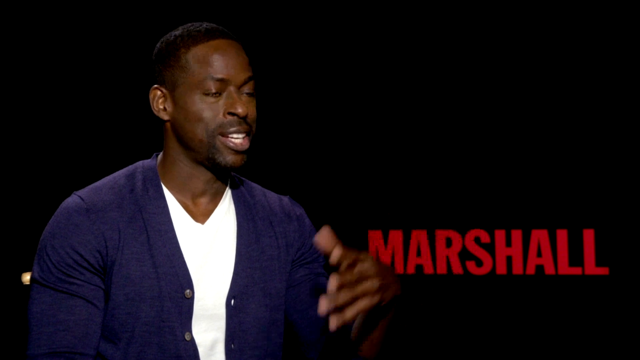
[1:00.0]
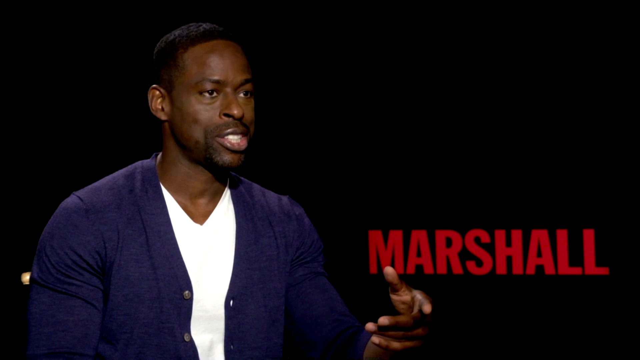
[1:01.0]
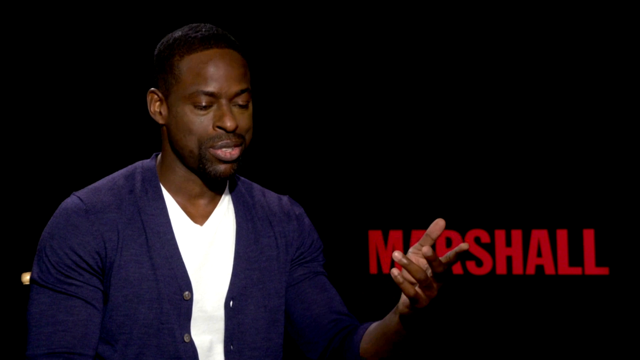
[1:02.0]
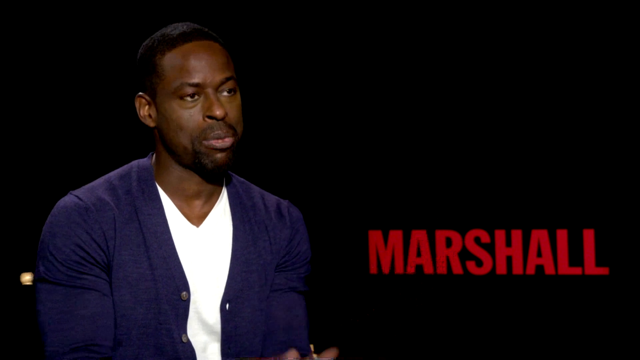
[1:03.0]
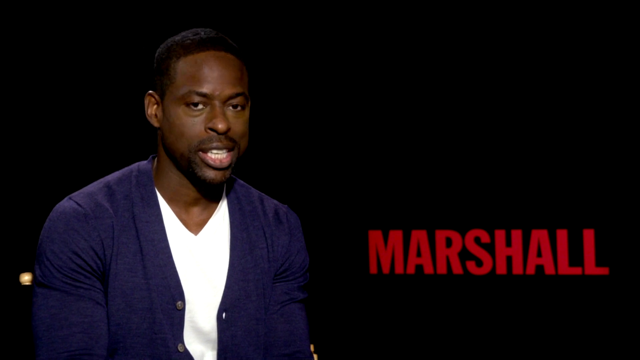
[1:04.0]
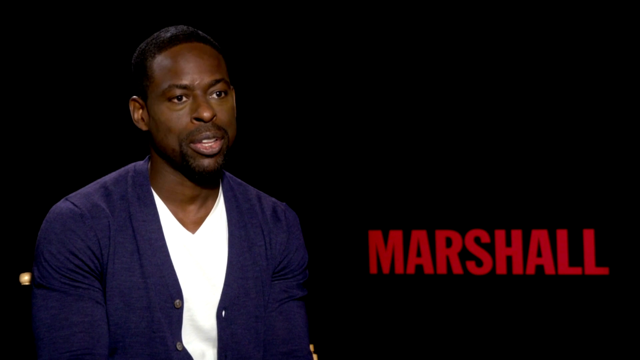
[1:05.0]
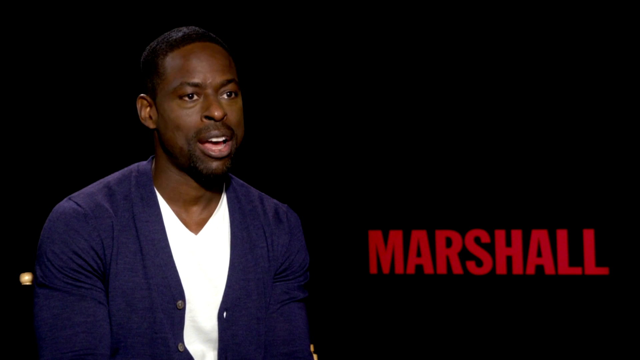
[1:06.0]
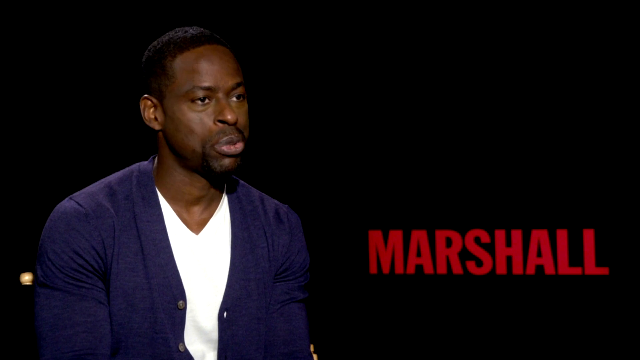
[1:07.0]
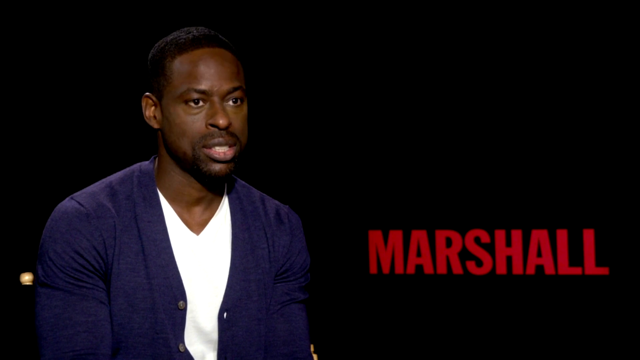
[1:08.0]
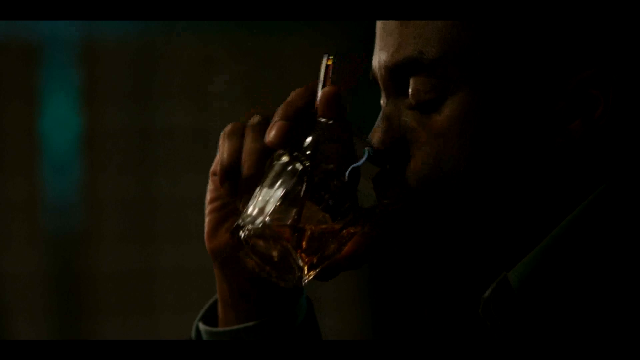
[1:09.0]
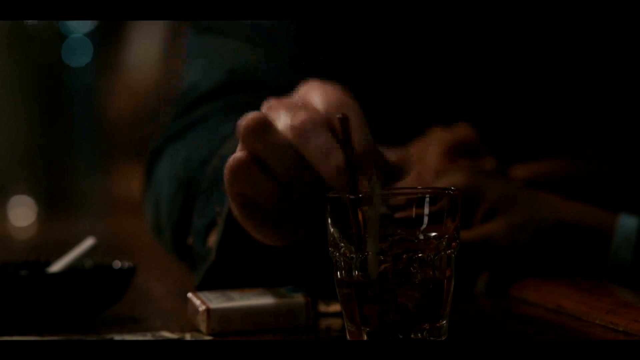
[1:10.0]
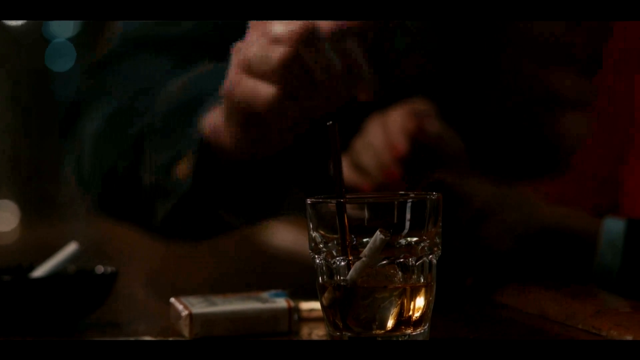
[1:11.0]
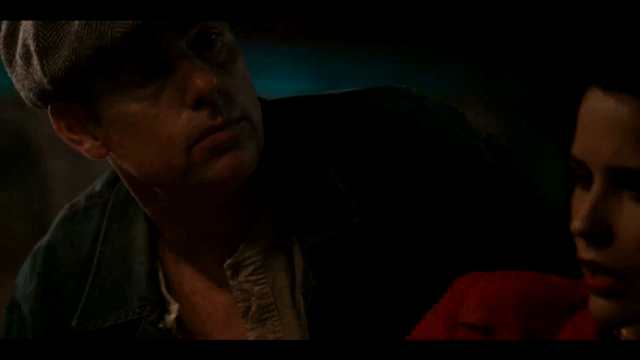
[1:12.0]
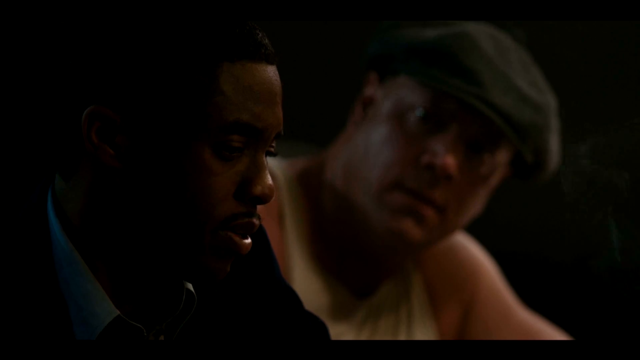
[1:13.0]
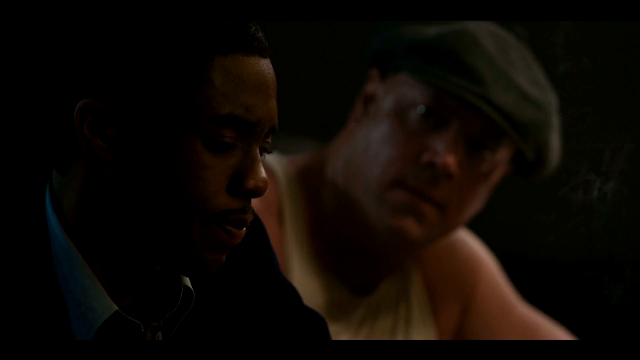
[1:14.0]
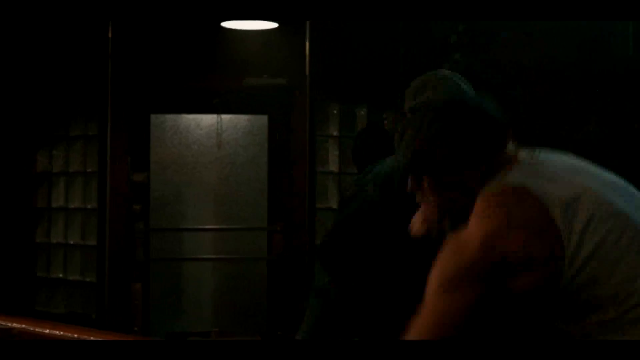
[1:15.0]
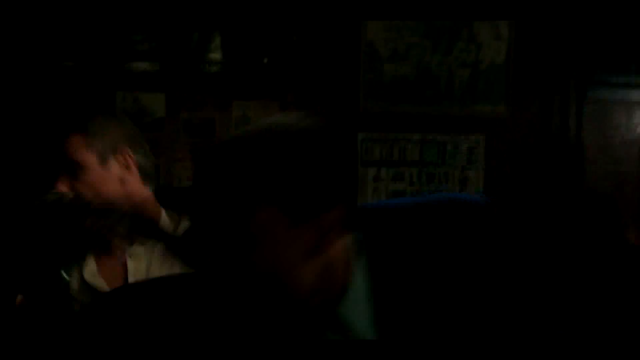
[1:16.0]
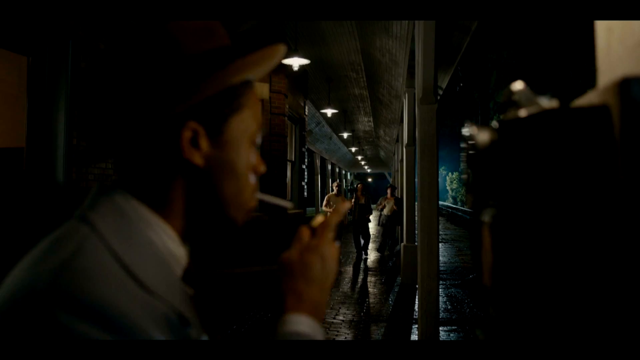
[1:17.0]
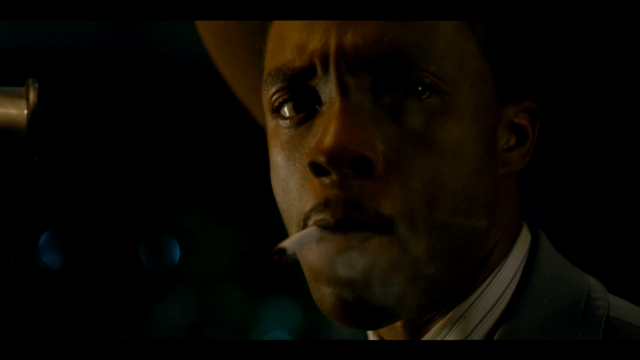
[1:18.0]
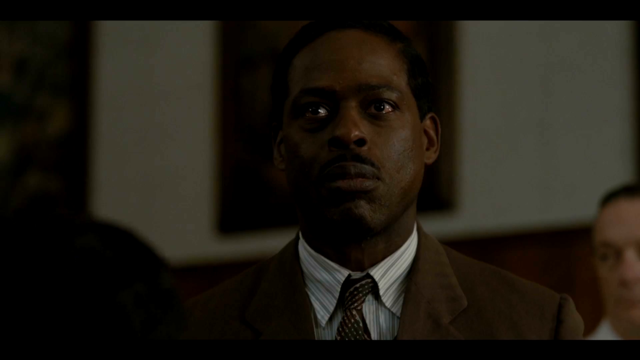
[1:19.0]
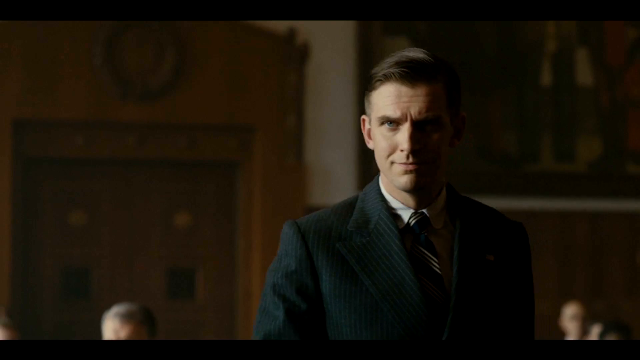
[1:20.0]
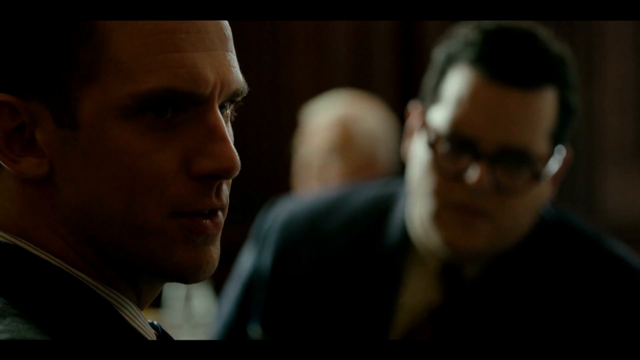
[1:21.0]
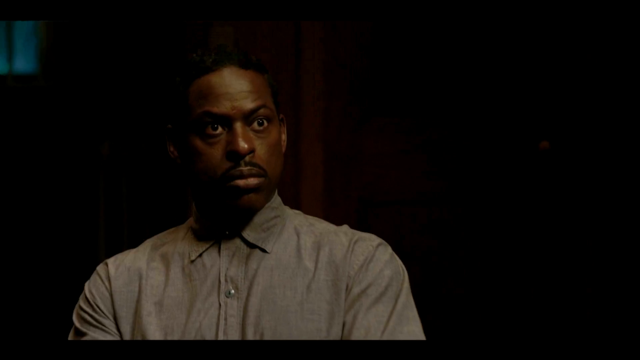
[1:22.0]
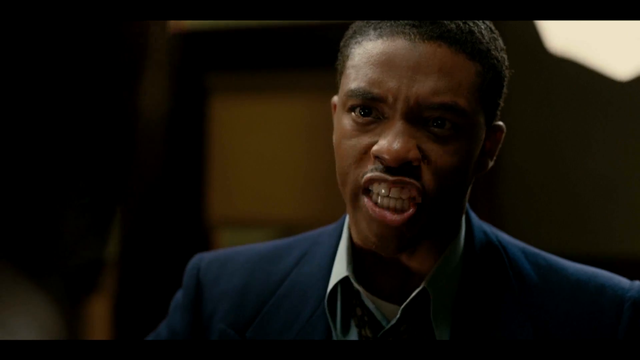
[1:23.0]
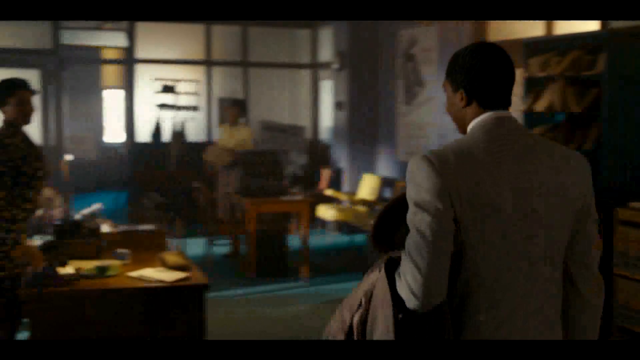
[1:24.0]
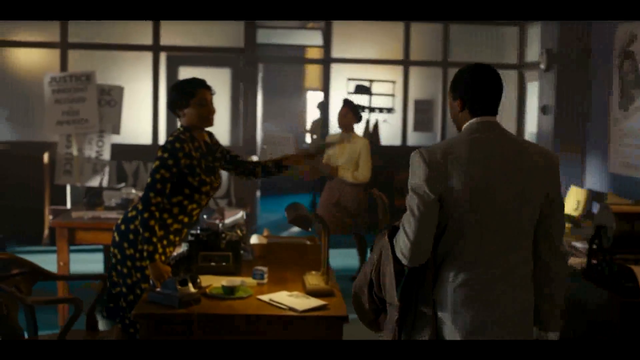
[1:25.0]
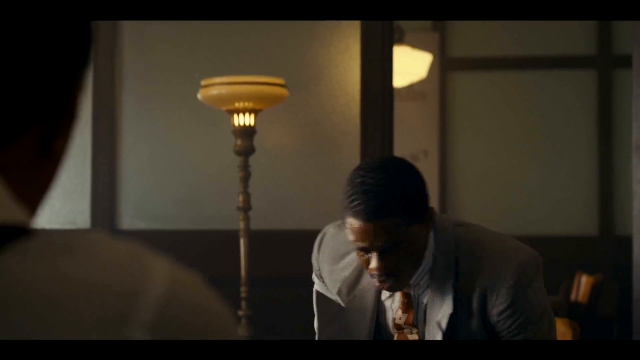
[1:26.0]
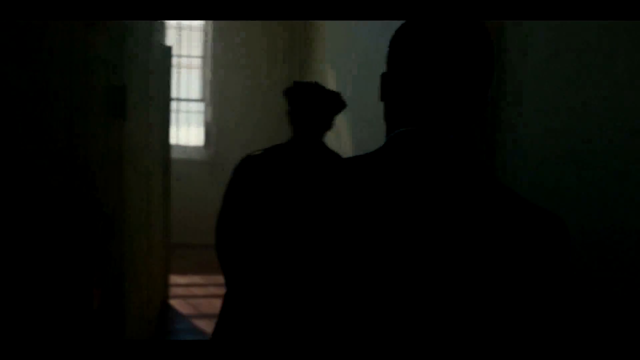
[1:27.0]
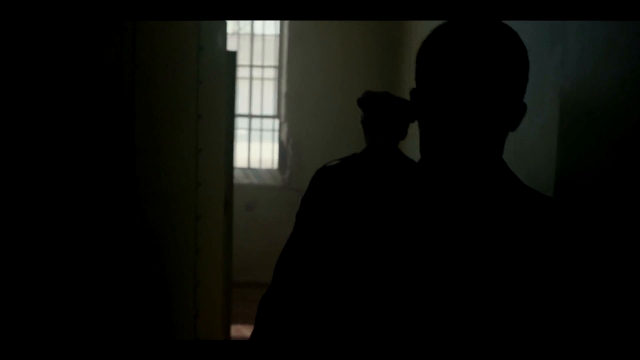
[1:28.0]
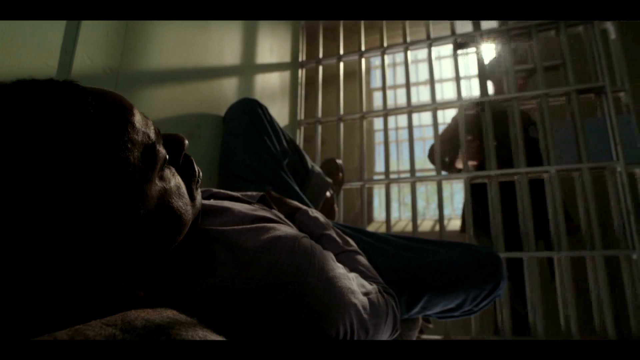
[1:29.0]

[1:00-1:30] The man in the purple vest continues to be interviewed and talks. The movie scenes are quite dark. In one, a man holds up a shotgun to one of the characters. Another scene appears to take place in a courtroom, with what looks like legal action about to happen. The main character is thrown into jail and lies in the cell, and then another character wearing a suit comes in, possibly his lawyer. A flag reads "NAACP 1909".